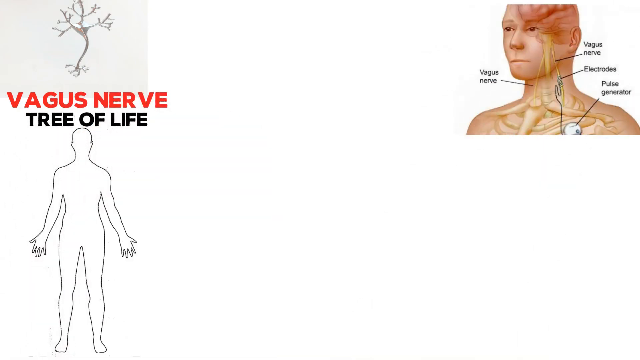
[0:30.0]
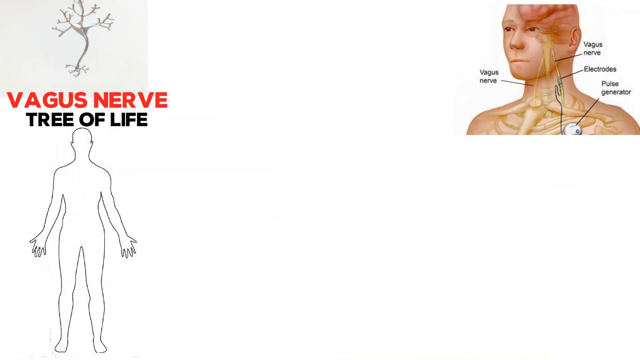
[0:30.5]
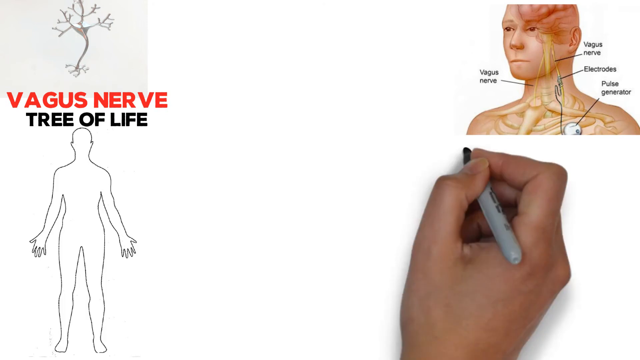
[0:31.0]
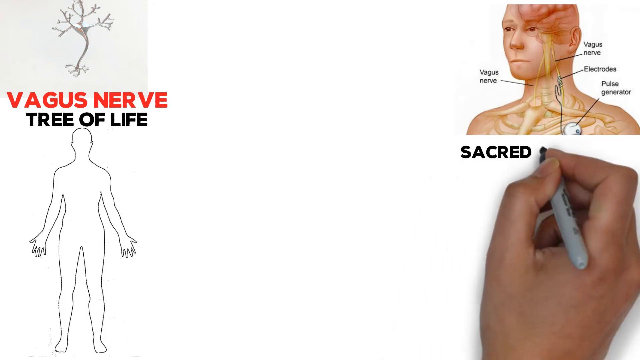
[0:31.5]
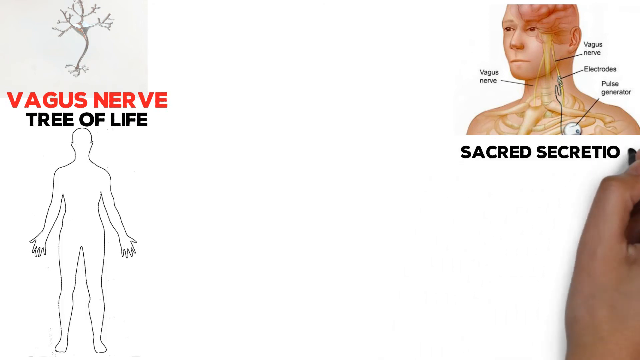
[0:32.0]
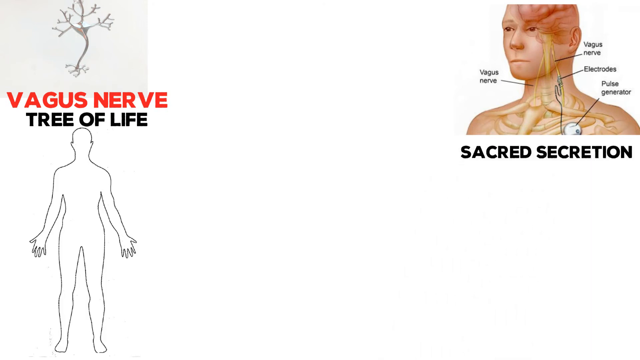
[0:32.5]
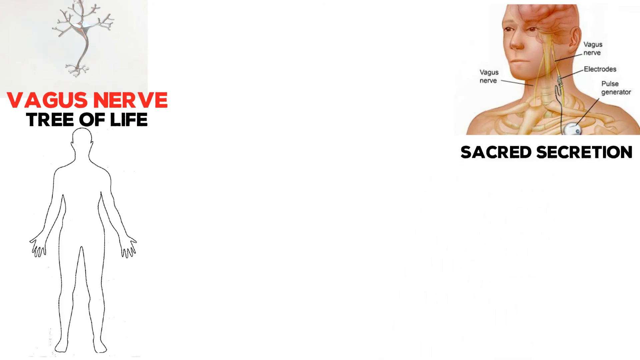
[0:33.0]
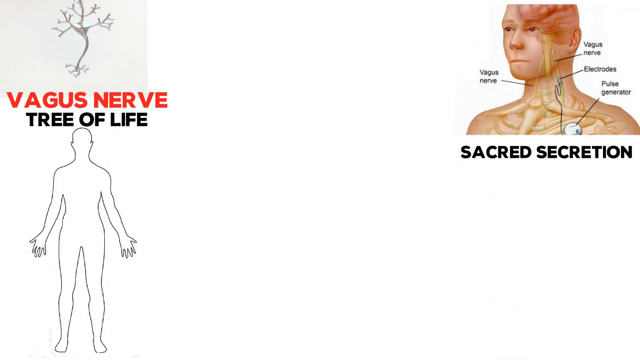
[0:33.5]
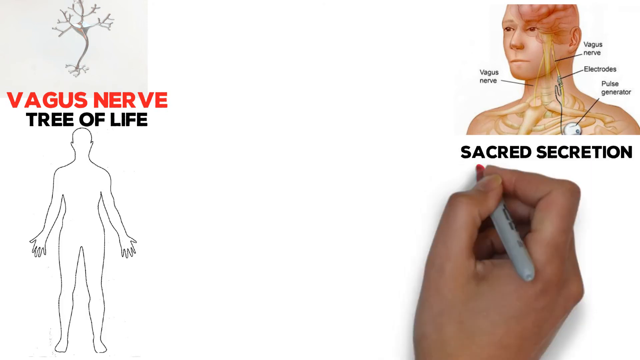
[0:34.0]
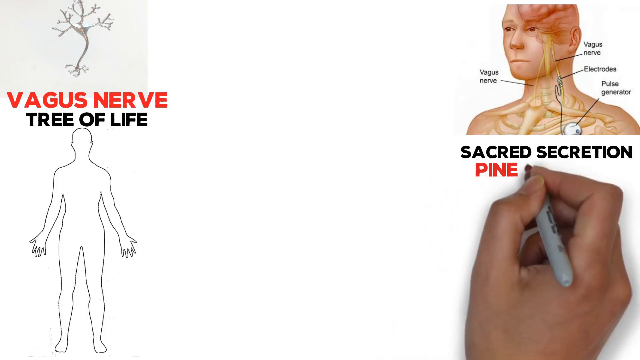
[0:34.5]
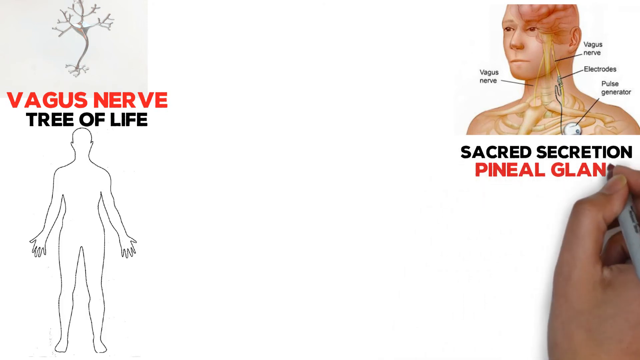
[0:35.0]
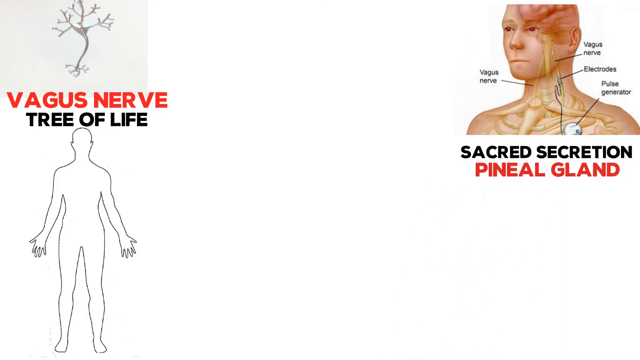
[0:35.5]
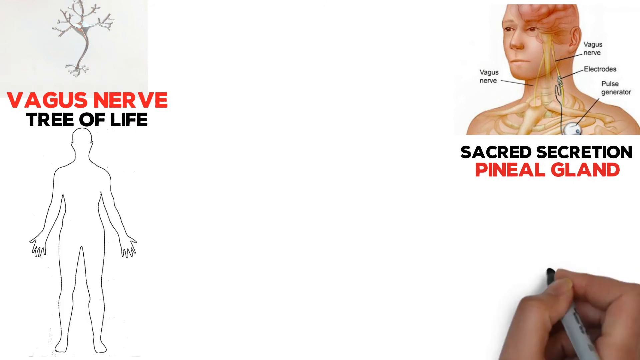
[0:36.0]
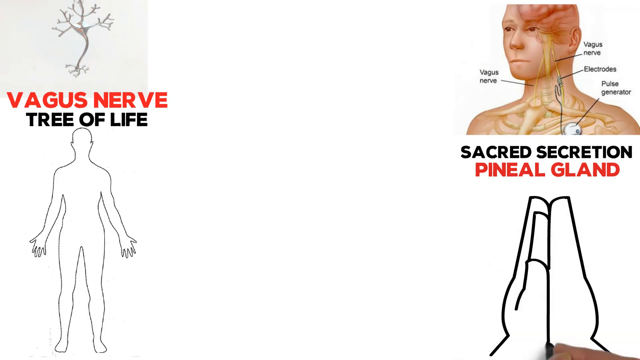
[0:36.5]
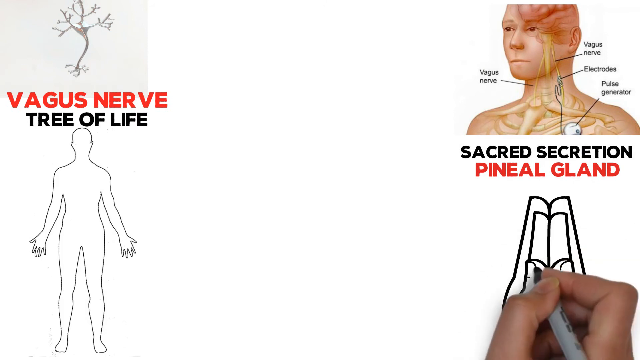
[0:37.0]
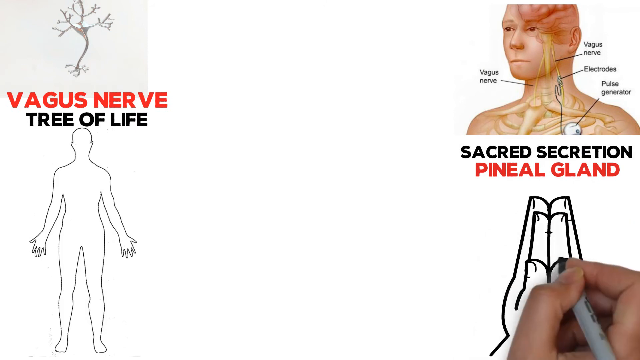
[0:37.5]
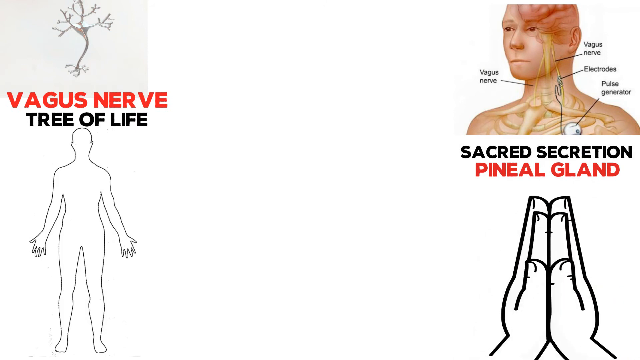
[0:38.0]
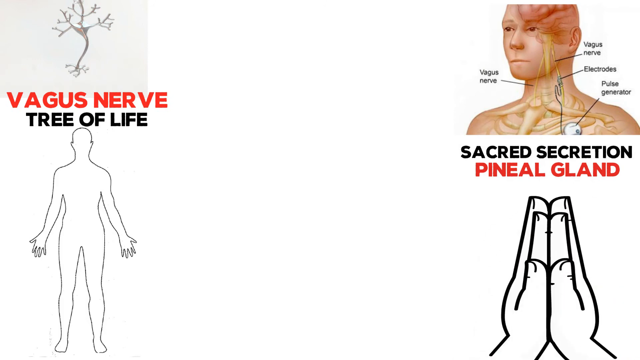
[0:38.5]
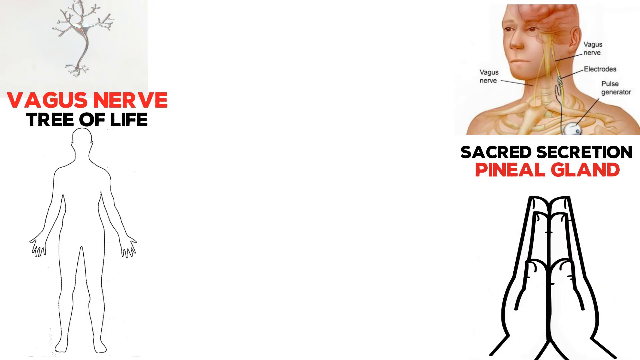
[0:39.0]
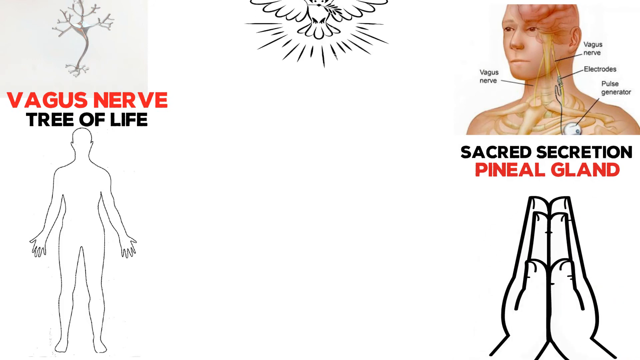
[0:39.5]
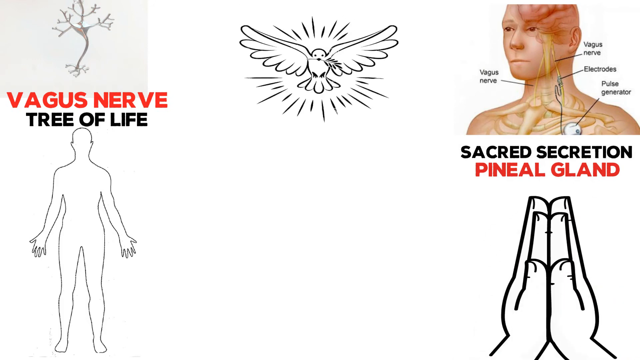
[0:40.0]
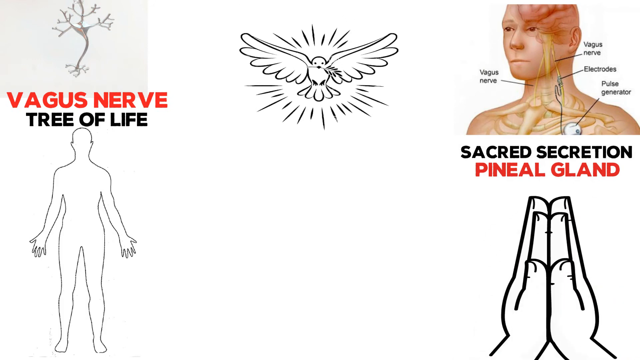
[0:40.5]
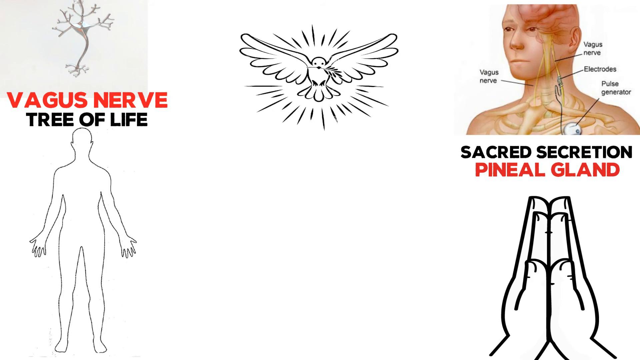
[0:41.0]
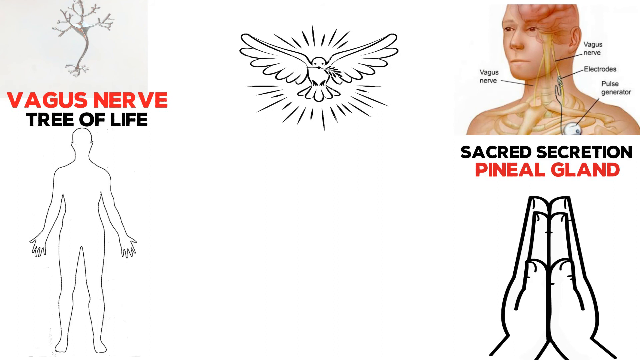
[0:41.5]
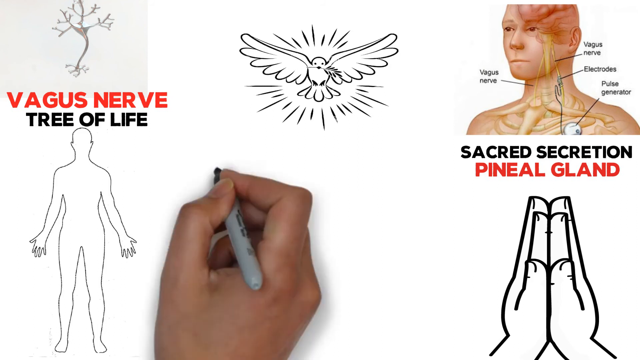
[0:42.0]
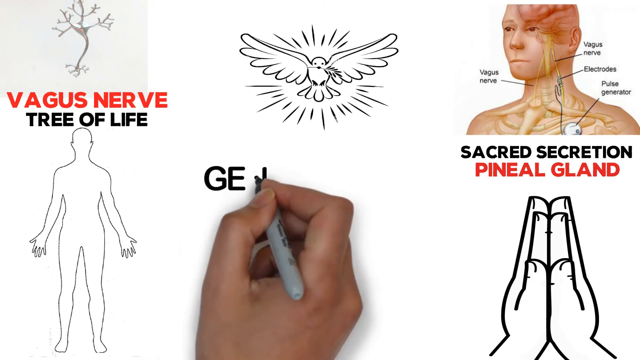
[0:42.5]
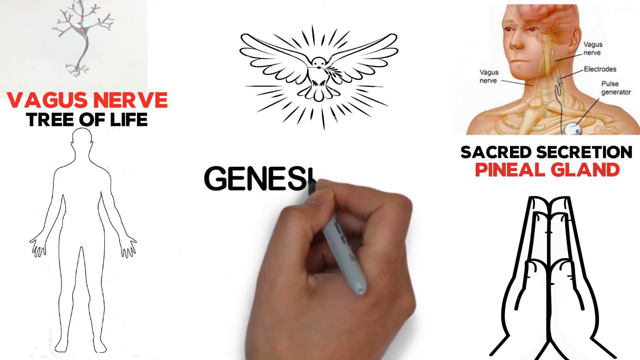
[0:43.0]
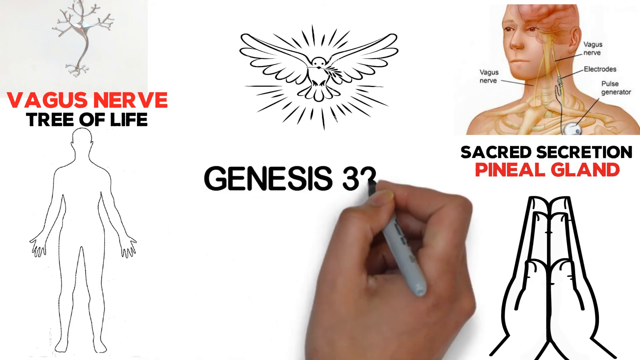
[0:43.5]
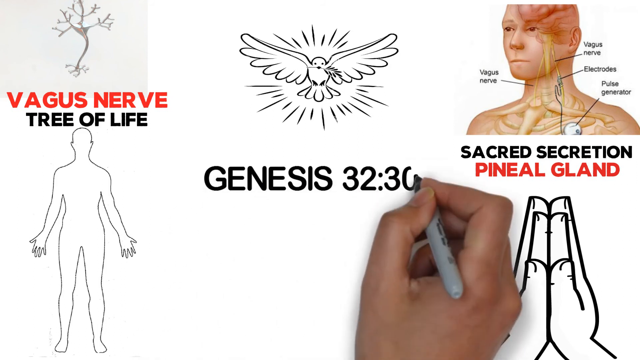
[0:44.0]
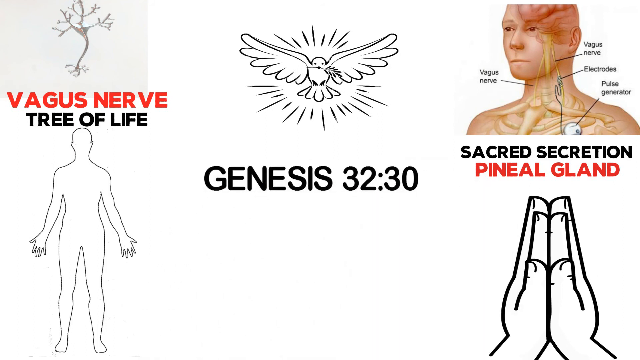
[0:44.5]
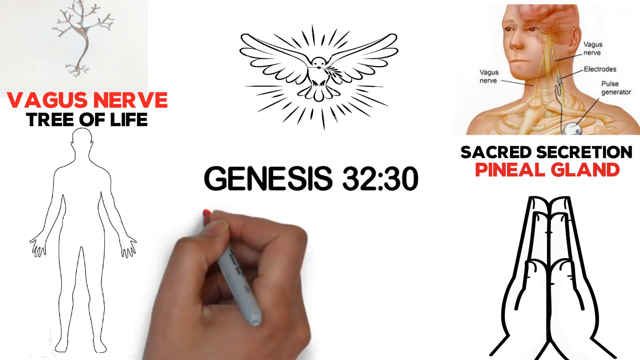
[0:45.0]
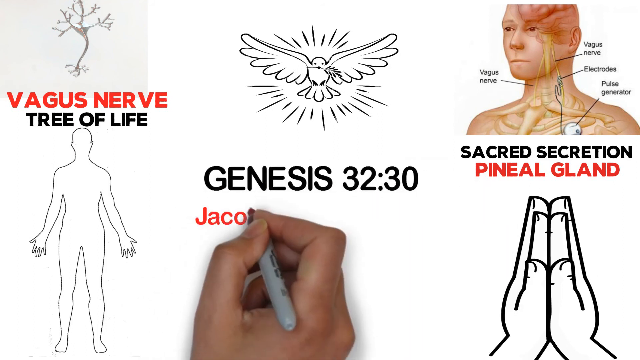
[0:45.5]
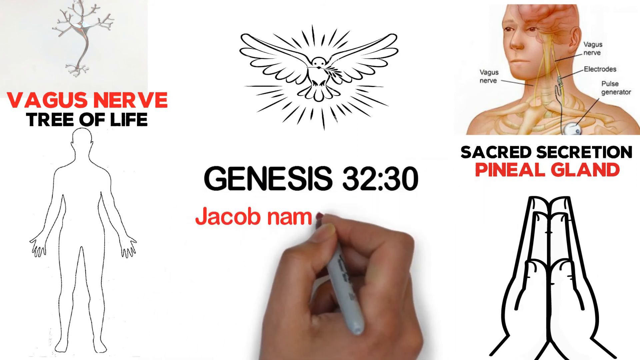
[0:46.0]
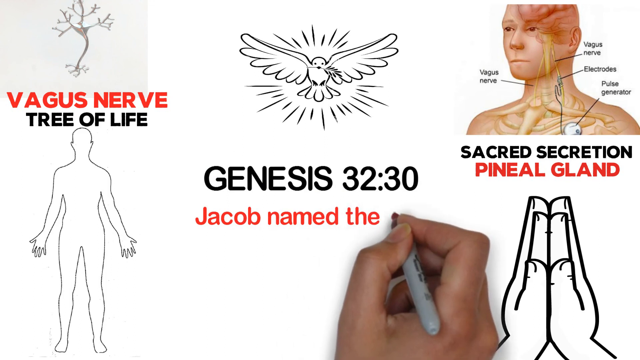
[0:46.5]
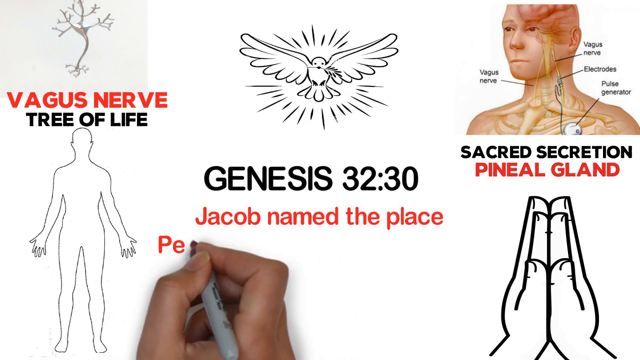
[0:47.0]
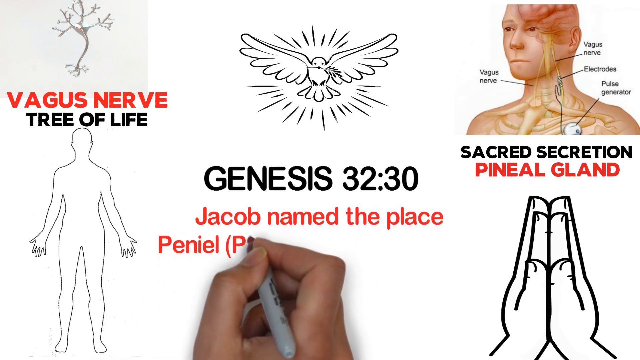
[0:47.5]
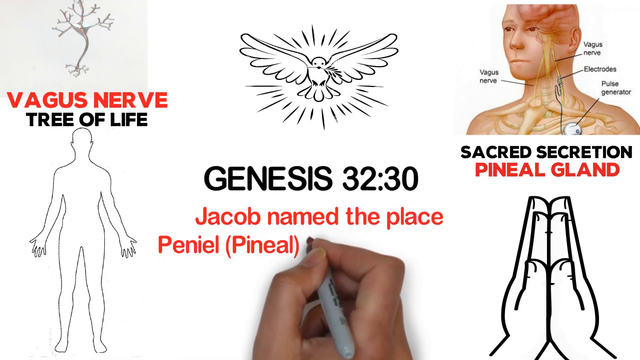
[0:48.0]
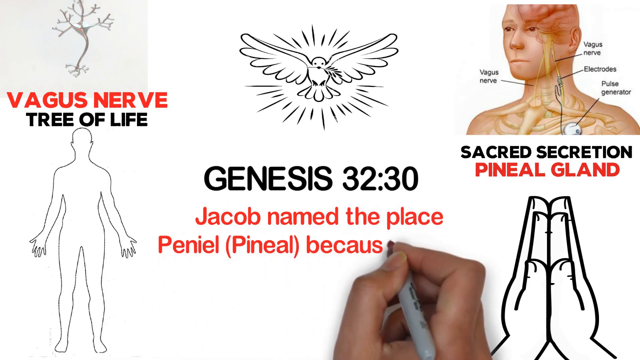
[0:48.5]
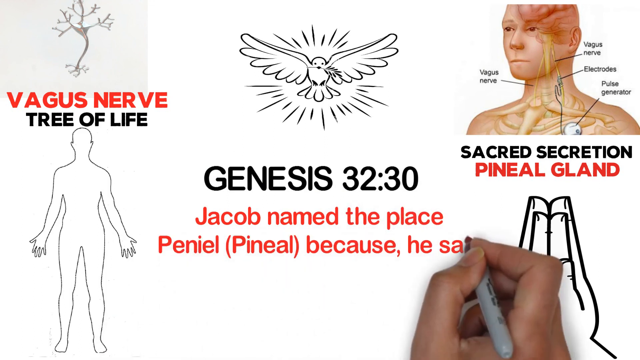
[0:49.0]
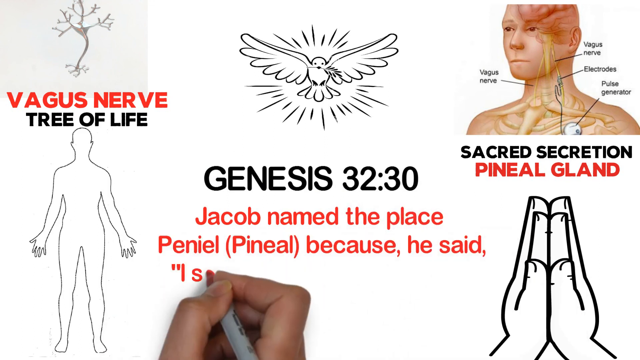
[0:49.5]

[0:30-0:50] Below the anatomy image on the right, the hand writes the line "sacred secretion", and below it another line in red reading "pineal gland". Below that, two drawn hands appear together, touching each other as if in prayer. In the center of the screen a black-and-white pigeon appears; it seems to be carrying a strand of grass and has a few arrows coming from it, suggesting it is glowing. Below the pigeon in the center, the text "Genesis 32:30" is written, and below that, lines of red text read "Jacob named the place Peniel (pineal) because he said I saw God".